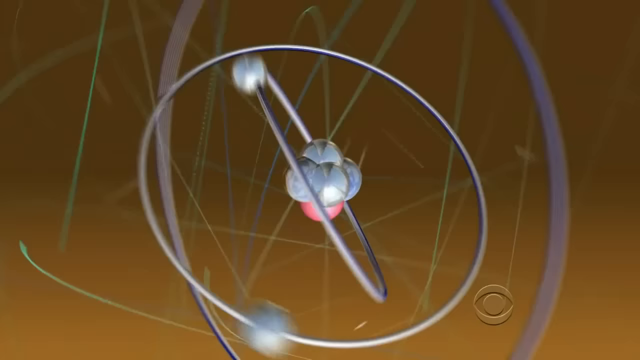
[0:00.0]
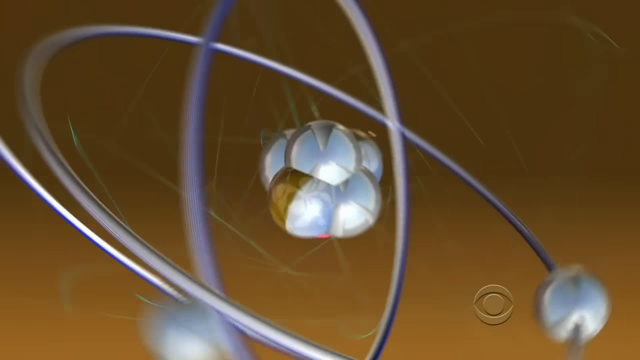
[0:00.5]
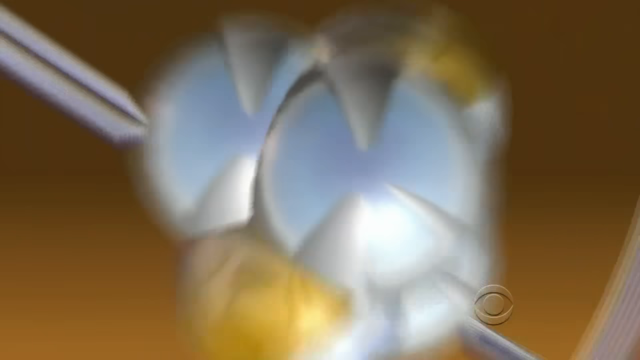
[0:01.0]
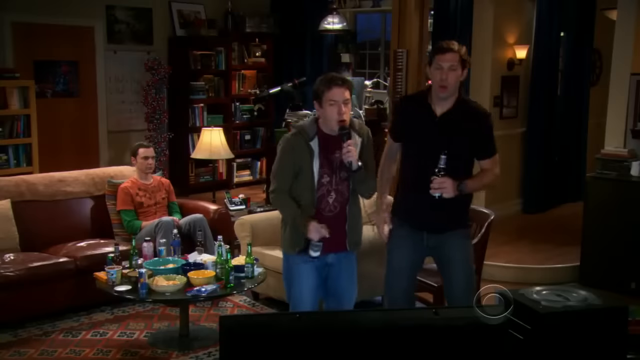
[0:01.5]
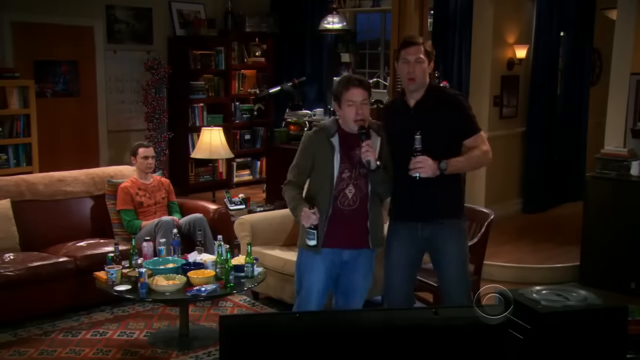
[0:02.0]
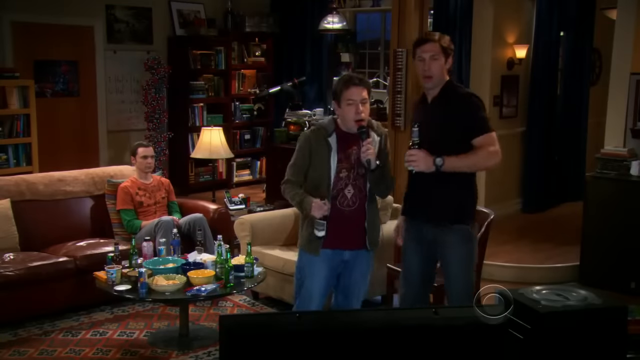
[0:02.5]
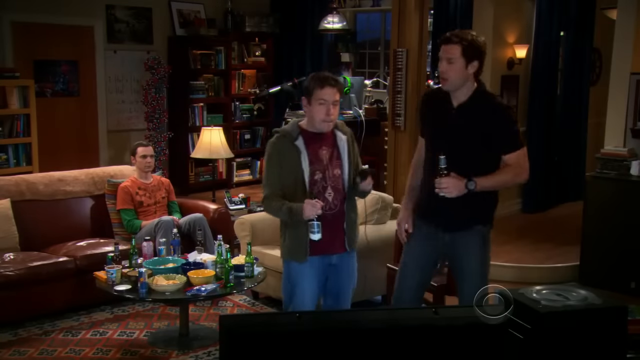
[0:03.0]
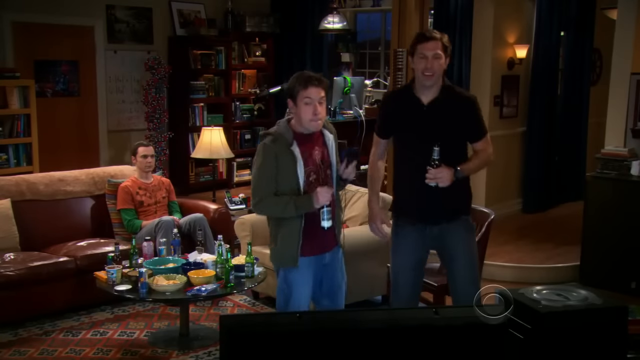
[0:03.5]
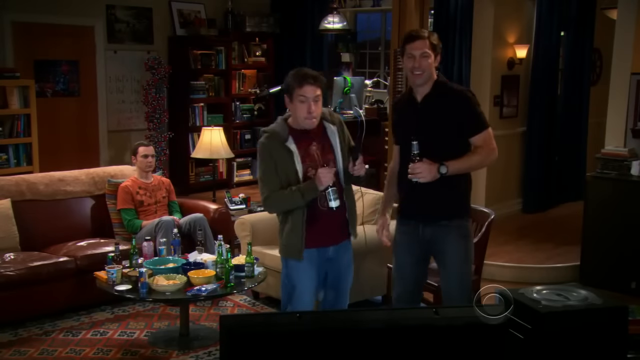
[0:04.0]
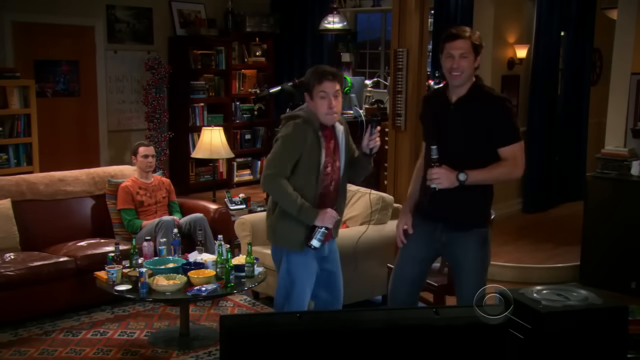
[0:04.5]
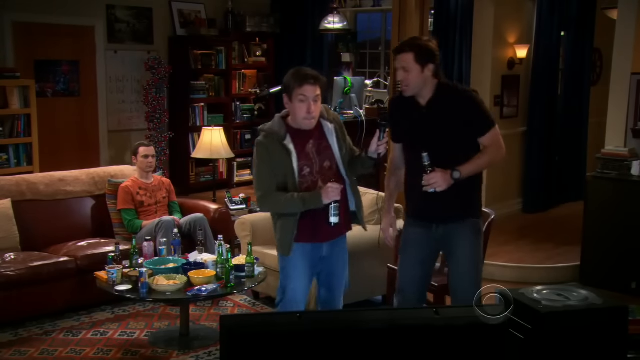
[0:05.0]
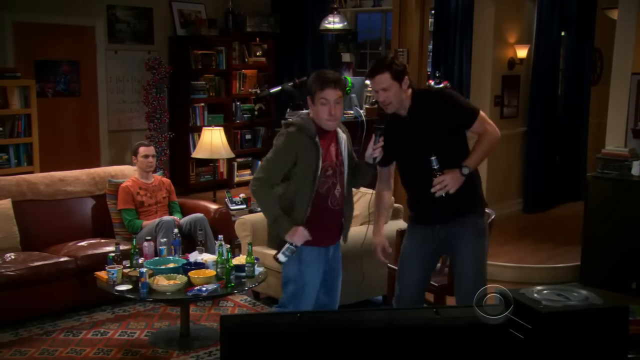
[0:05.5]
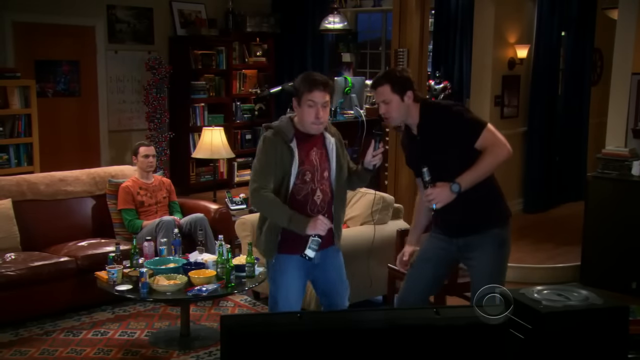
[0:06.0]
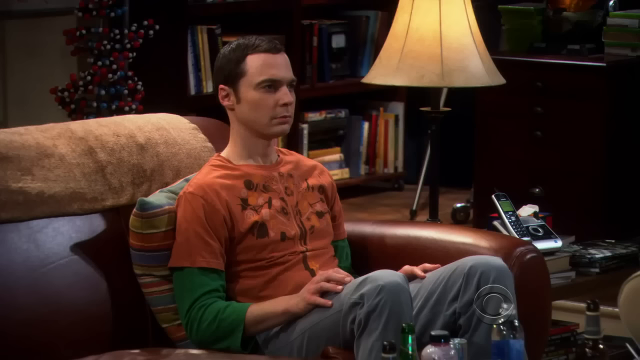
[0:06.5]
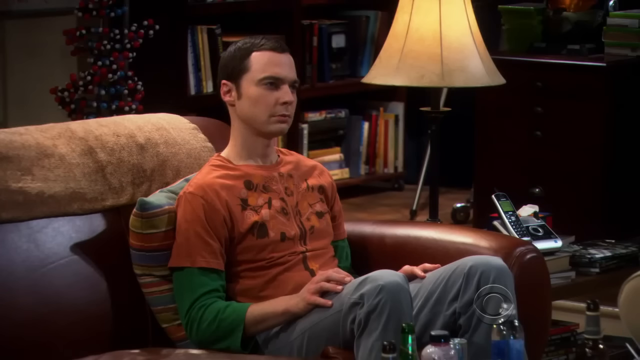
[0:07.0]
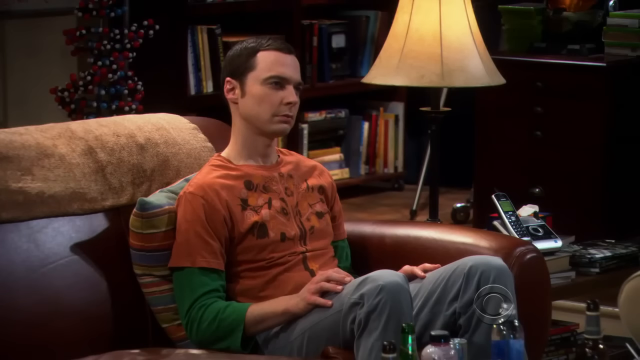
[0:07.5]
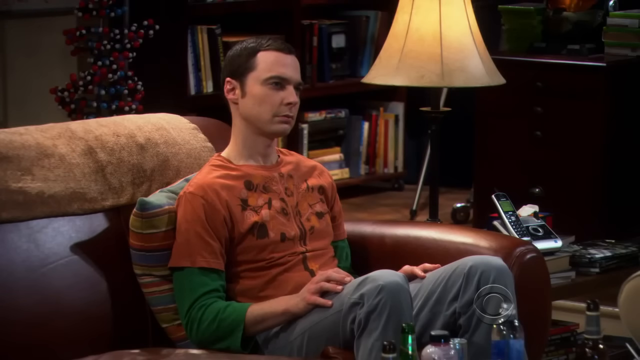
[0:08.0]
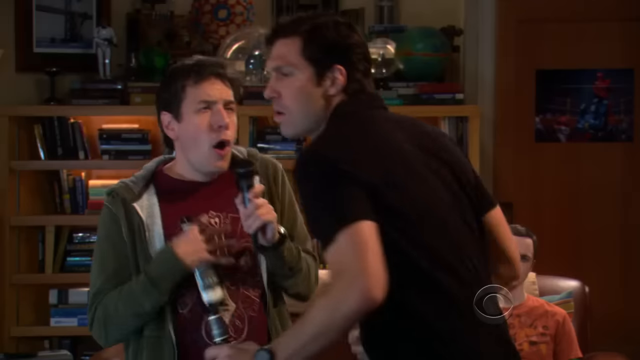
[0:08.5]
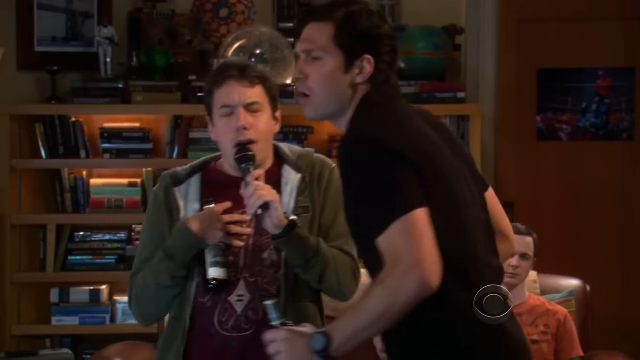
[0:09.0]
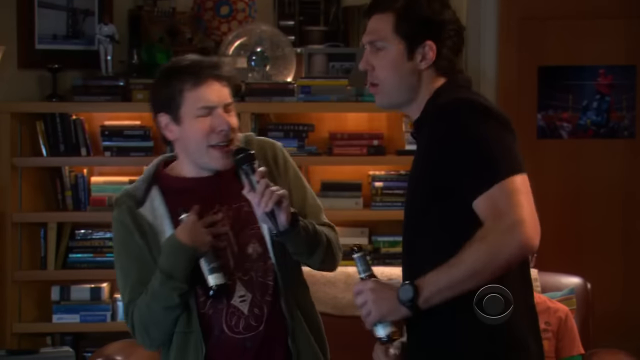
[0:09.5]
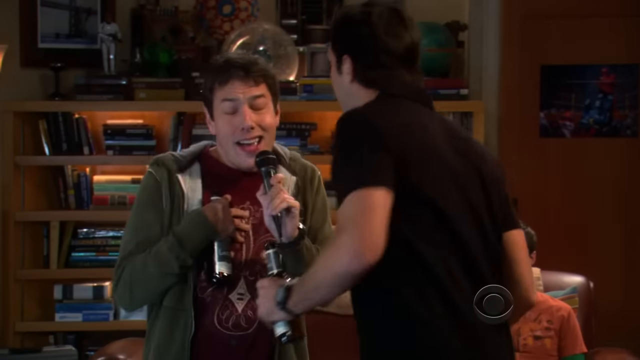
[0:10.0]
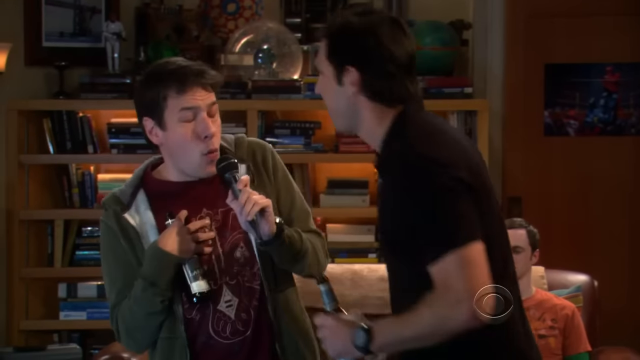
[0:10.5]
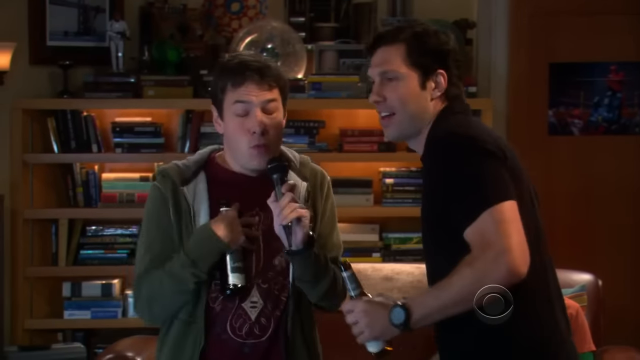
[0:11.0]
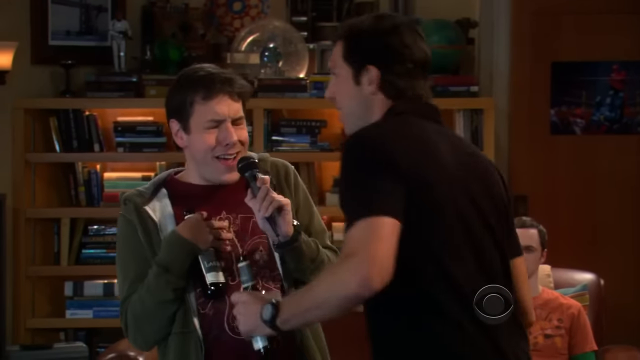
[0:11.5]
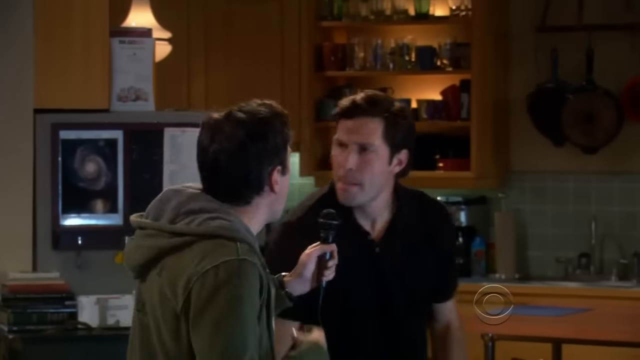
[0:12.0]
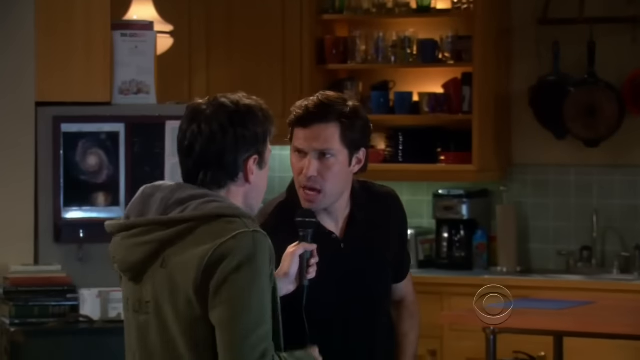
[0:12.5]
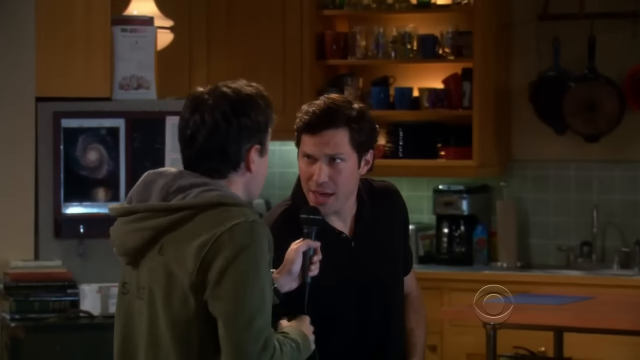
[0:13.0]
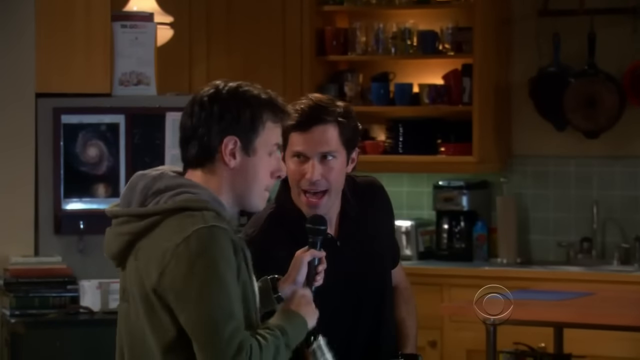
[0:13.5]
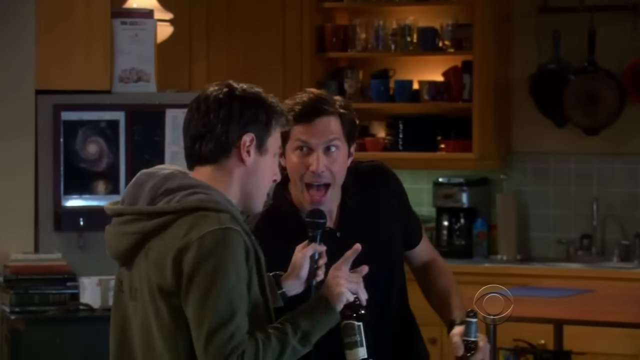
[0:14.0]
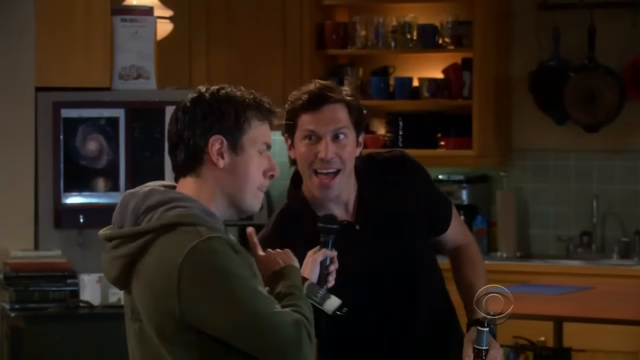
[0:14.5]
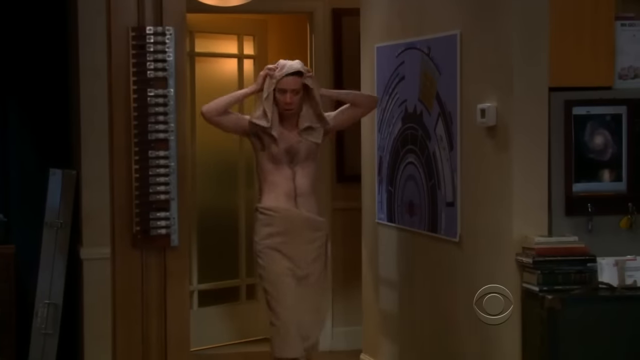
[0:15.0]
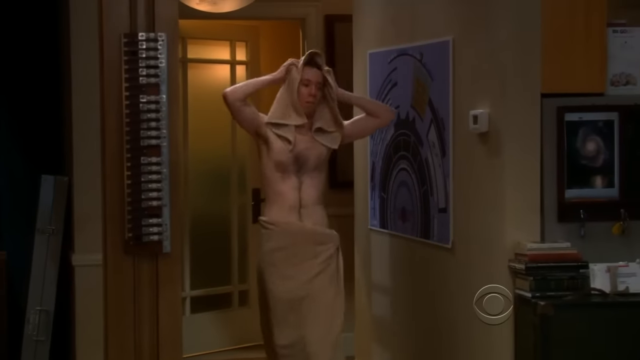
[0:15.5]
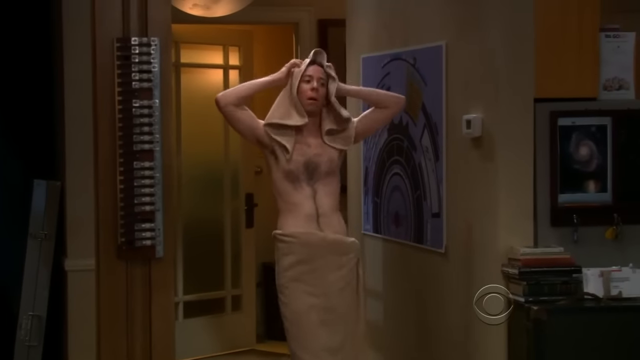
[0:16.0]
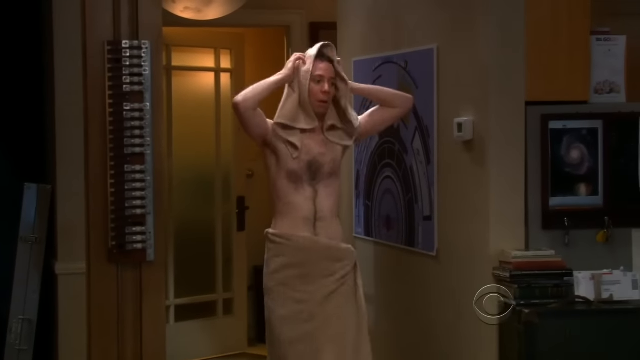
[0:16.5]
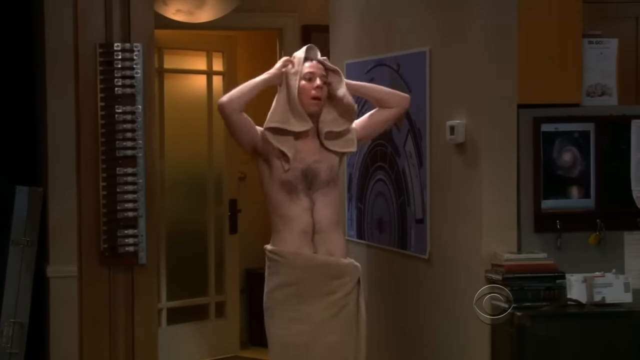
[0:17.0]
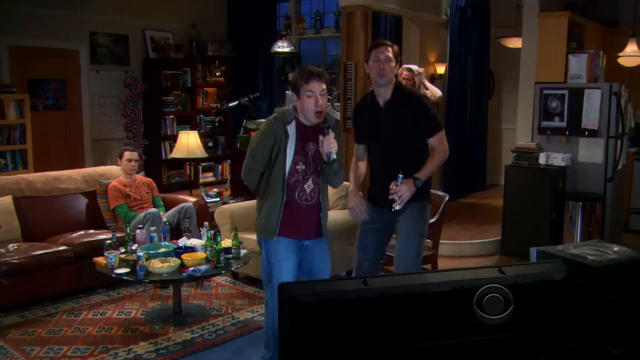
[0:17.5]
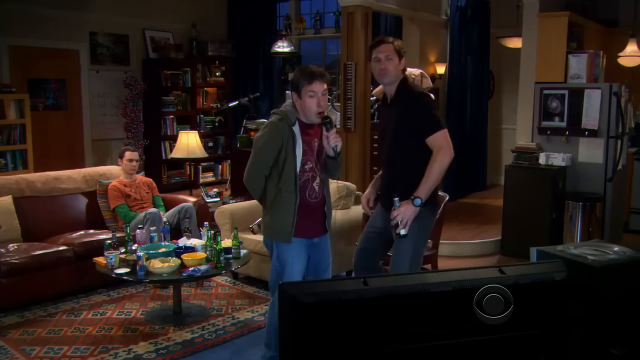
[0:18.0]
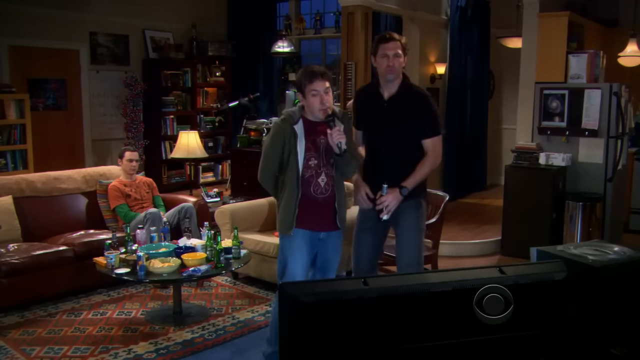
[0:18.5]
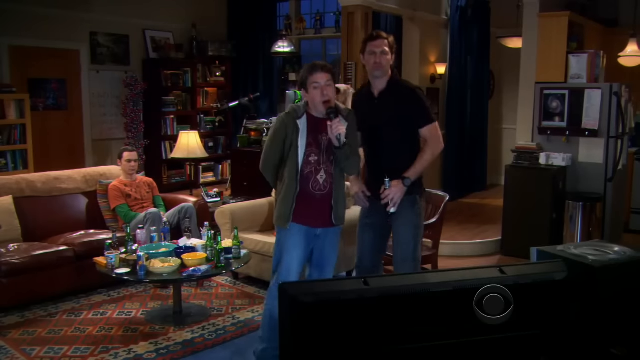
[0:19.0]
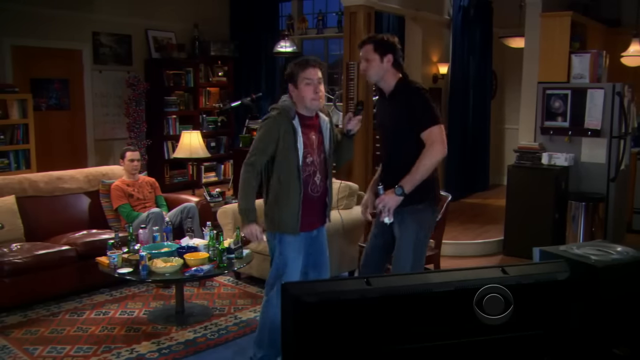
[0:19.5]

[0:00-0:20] The video opens on the sitcom with Sheldon. Sheldon is in his apartment, sitting on his couch in his favorite spot, with a pillow behind him; he wears an orange shirt over a green long-sleeve shirt. His two friends are drinking beer and dancing in front of the TV, singing karaoke or something into a microphone, while Sheldon just sort of looks at them. The table is full of bowls of chips or pretzels, beers and waters. His roommate is not seen. Somebody else comes out of the bedroom. Then rings, almost like the planet Jupiter, are shown spinning around.